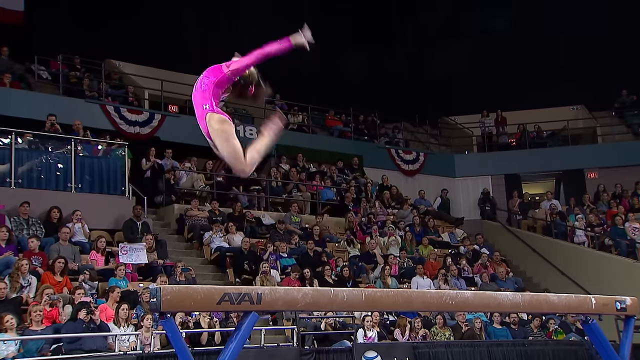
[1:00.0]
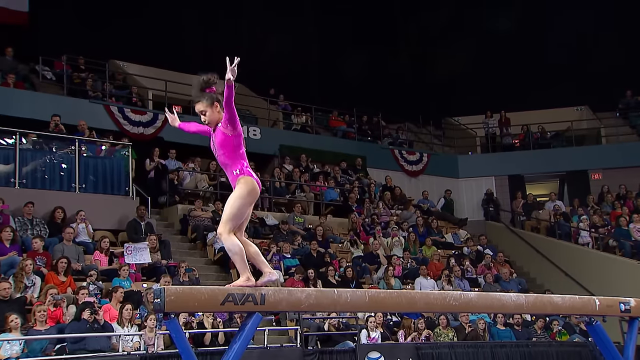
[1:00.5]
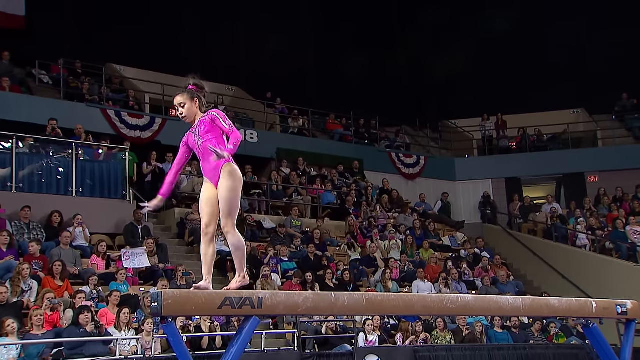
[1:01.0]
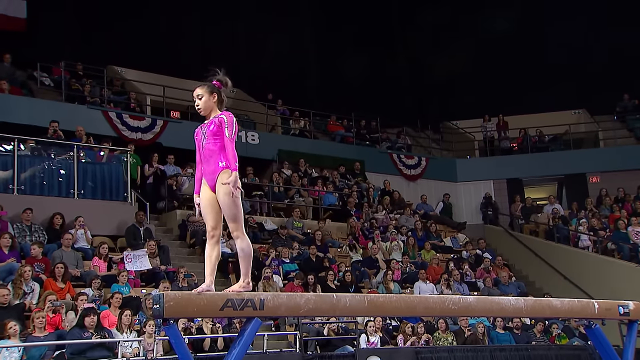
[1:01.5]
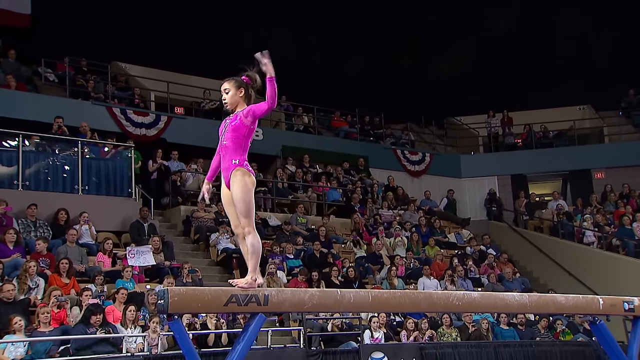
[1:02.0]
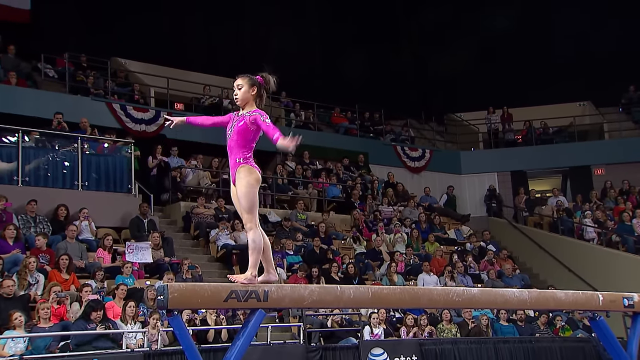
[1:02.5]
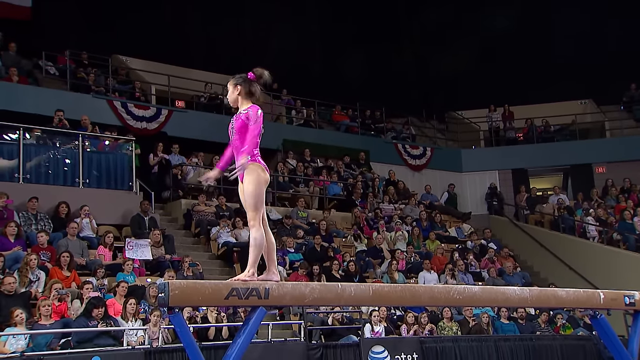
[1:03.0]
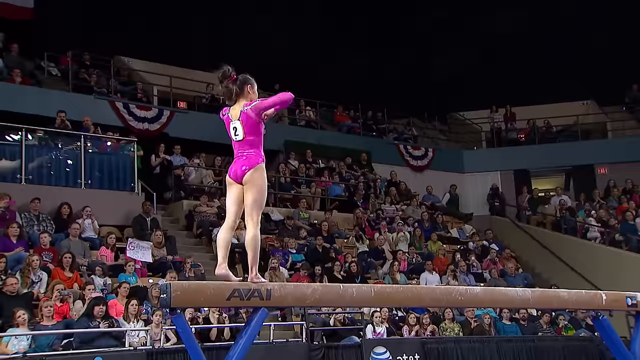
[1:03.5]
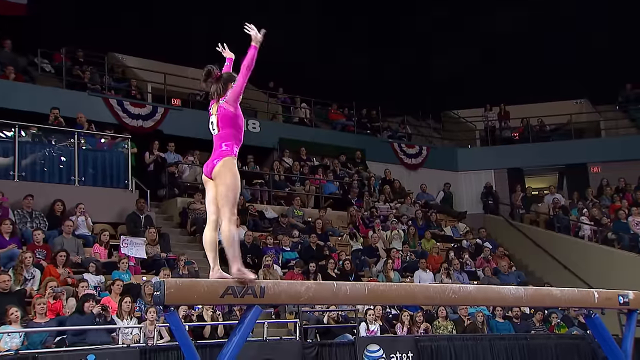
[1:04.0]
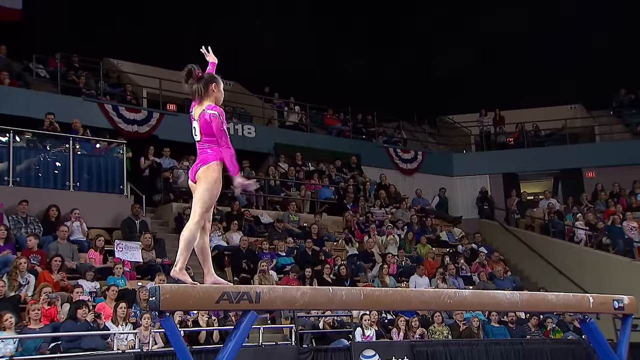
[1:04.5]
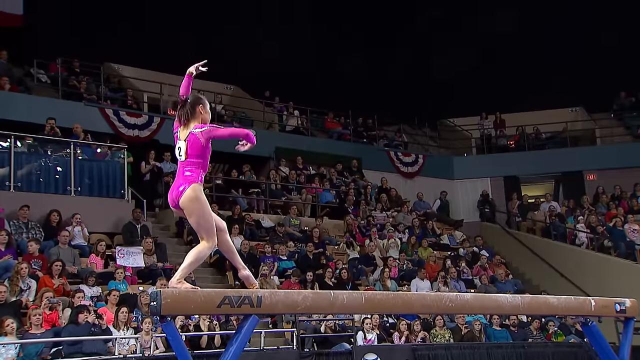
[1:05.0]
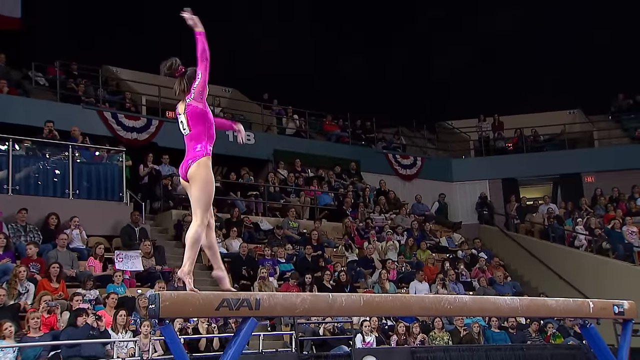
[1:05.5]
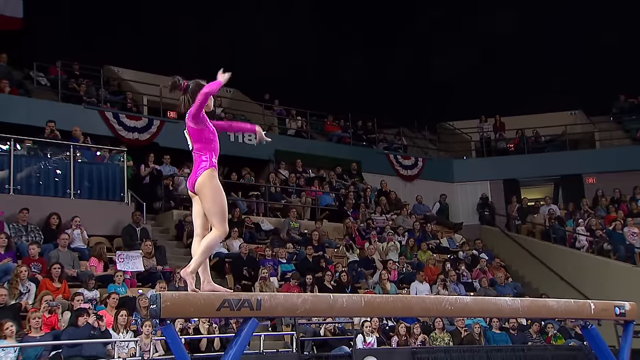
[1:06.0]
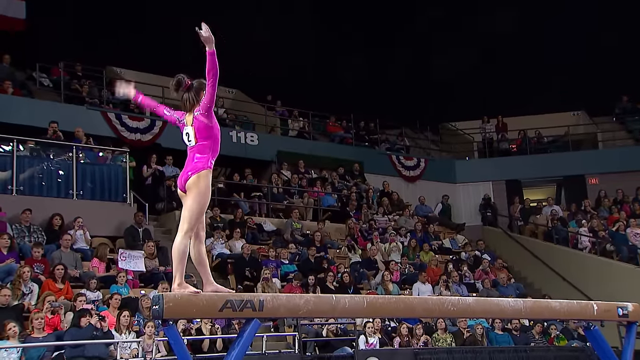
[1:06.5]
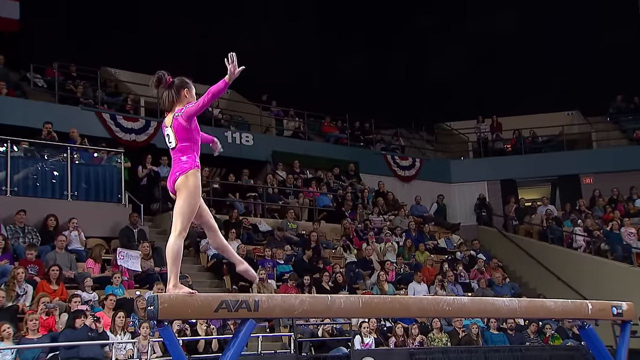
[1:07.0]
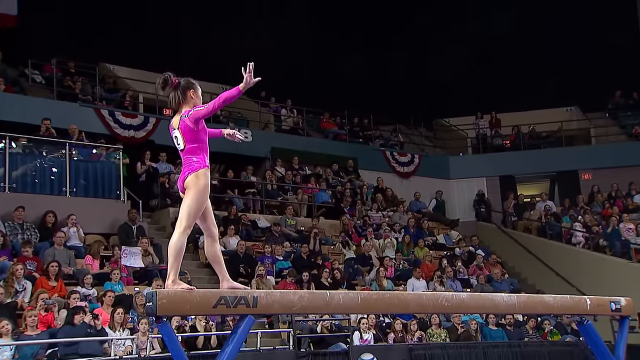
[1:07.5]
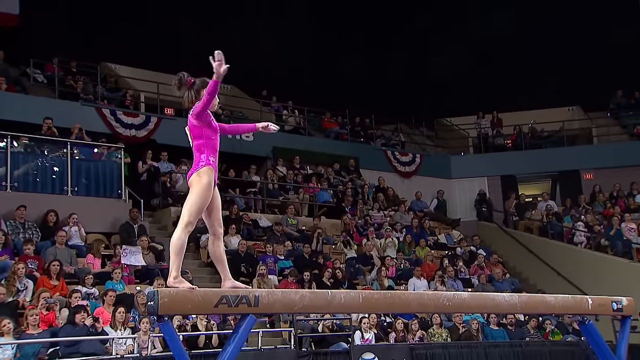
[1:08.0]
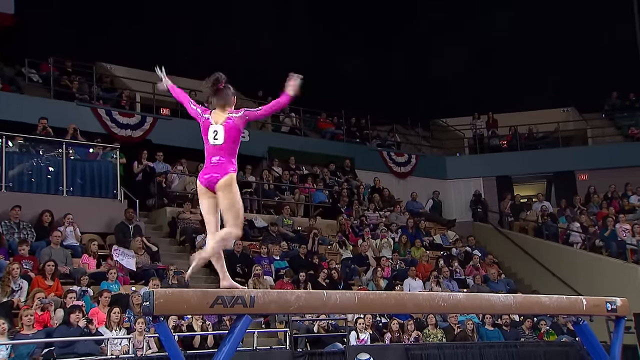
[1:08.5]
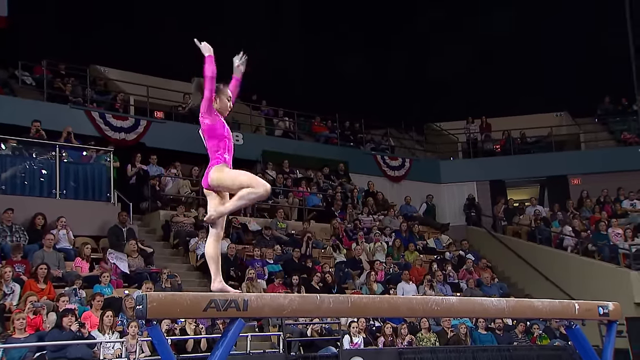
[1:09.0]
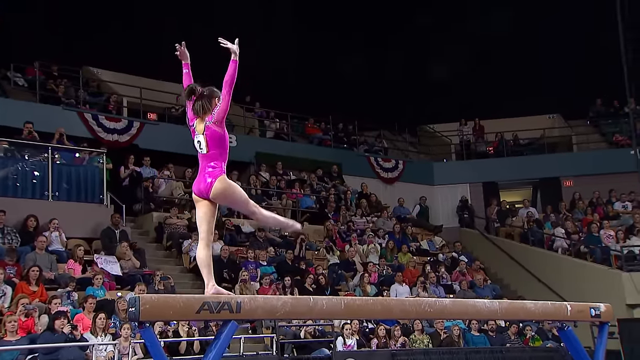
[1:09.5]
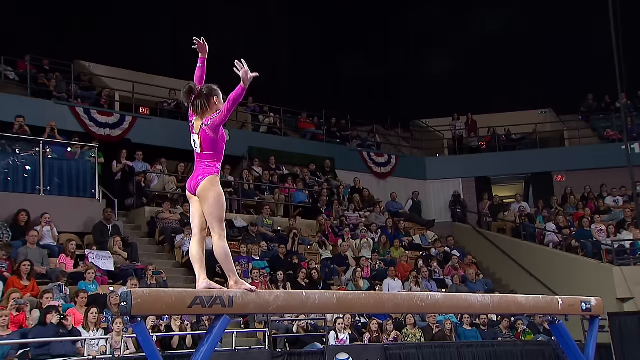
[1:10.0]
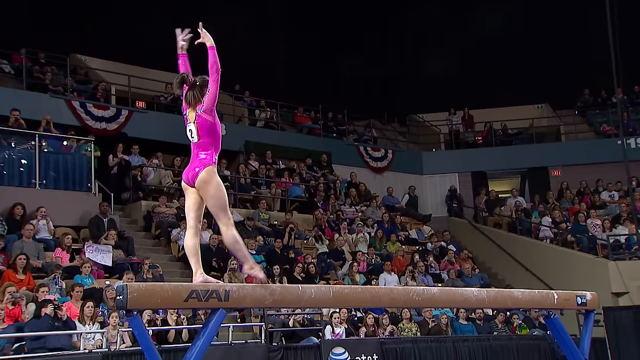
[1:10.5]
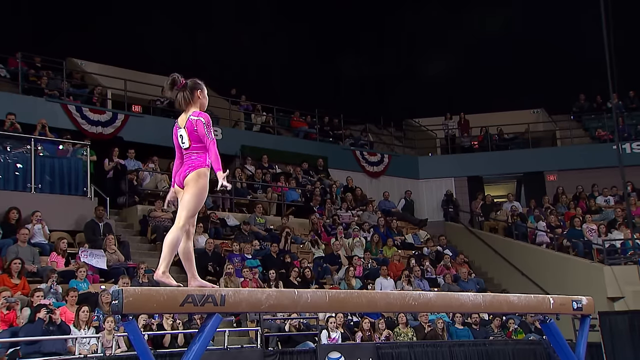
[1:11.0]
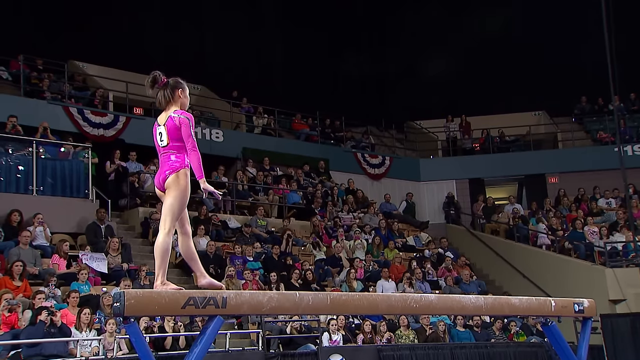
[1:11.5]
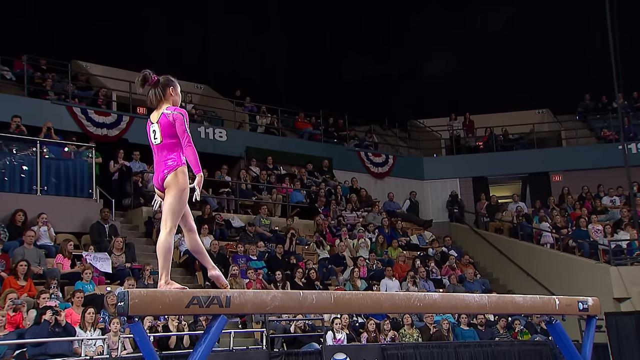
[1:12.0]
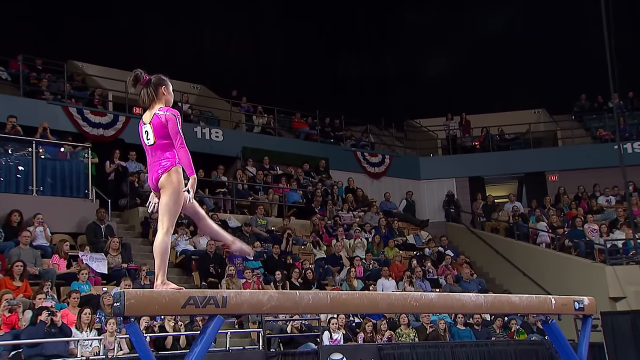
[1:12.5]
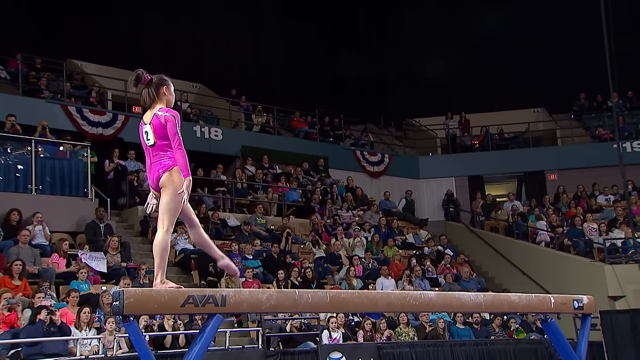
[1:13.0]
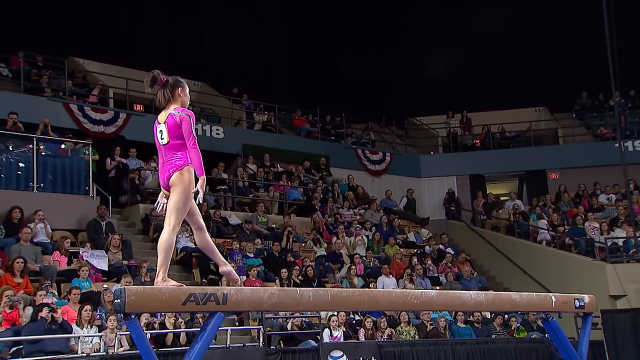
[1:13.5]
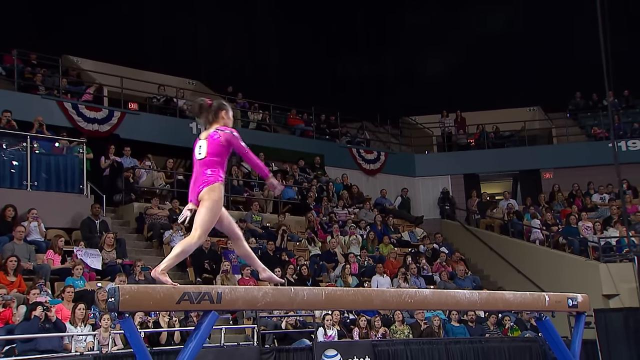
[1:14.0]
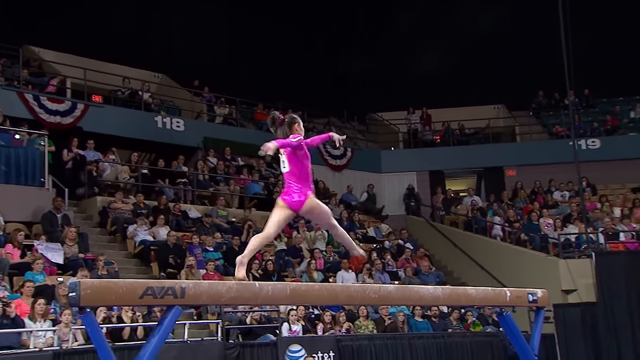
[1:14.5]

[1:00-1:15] The gymnast jumps with her hands in the air, kind of wobbling around; her arm to the left kind of goes up, and she twirls around with her hands and arms in the air, then jumps, kicks, and flips. At one point her legs are up in the air, kind of behind her, with one hand on the beam, and she twists around. She then stands with one foot forward and the other leg back, right arm forward and left arm back. She jumps up in the air with her legs kind of back behind her while her entire upper body is curled backwards as well, extremely flexible. She lands and brings her arms down, palms facing the beam, and seems to be regaining her balance. Her left arm kind of swirls around while her right arm is extended outward; she brings her arms in, then up in the air, with her left foot forward and right foot back, her left hand facing forward and right arm back.